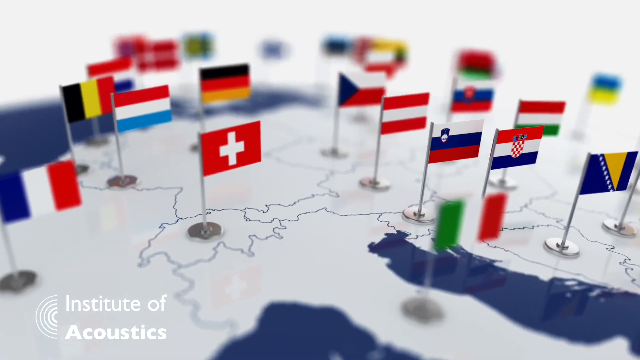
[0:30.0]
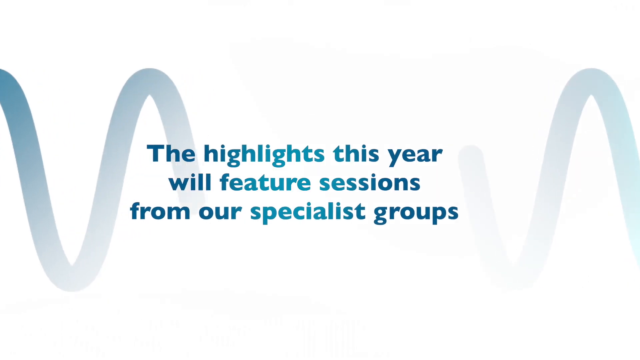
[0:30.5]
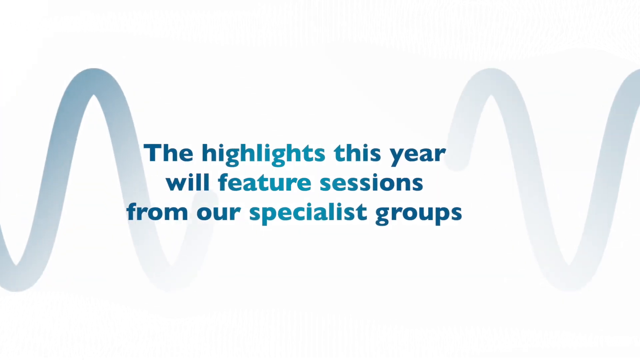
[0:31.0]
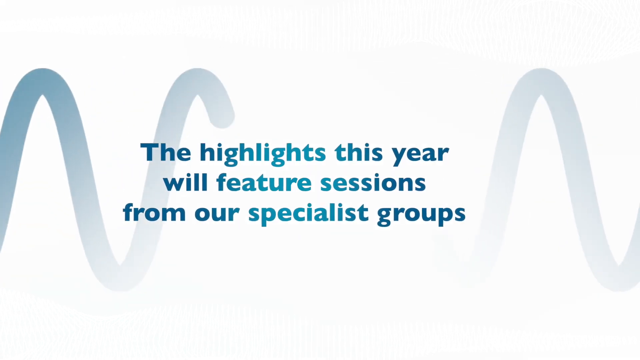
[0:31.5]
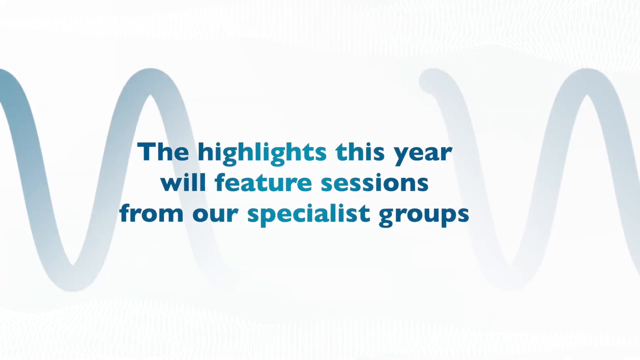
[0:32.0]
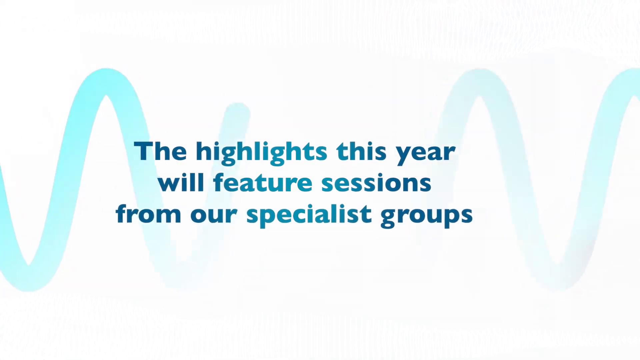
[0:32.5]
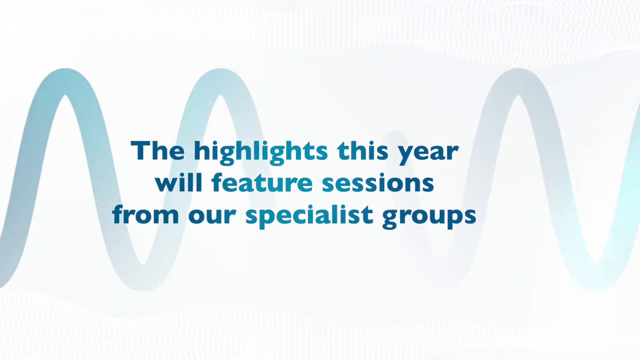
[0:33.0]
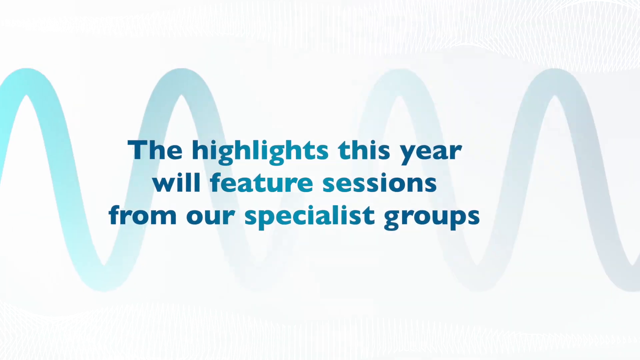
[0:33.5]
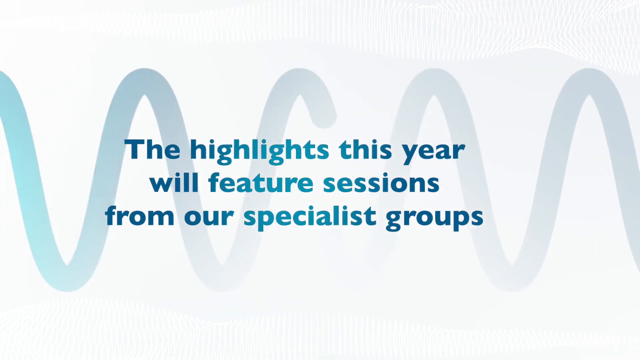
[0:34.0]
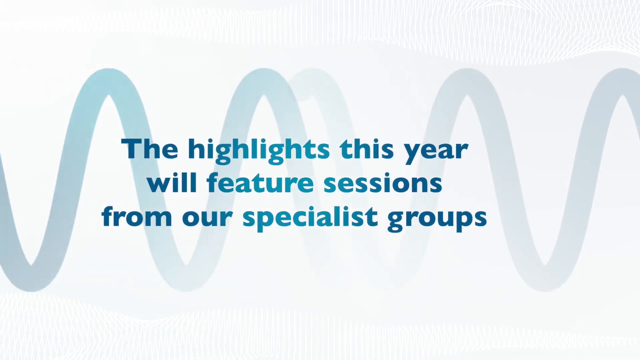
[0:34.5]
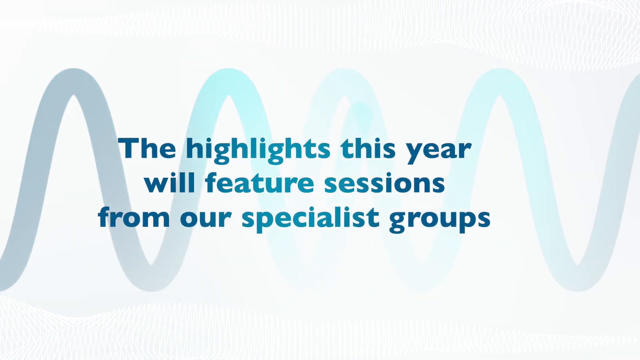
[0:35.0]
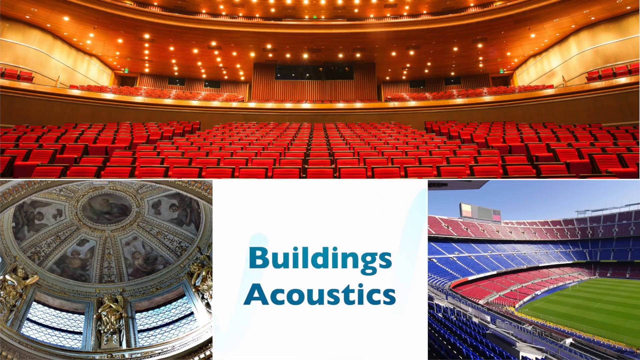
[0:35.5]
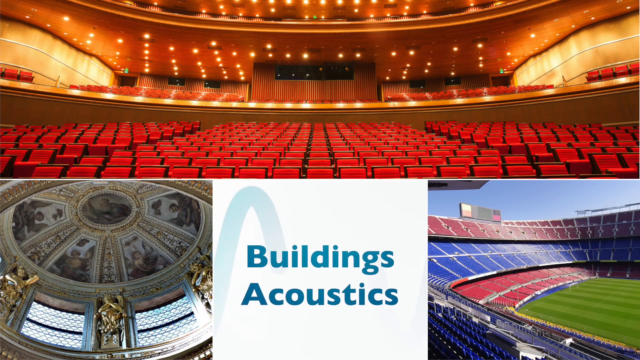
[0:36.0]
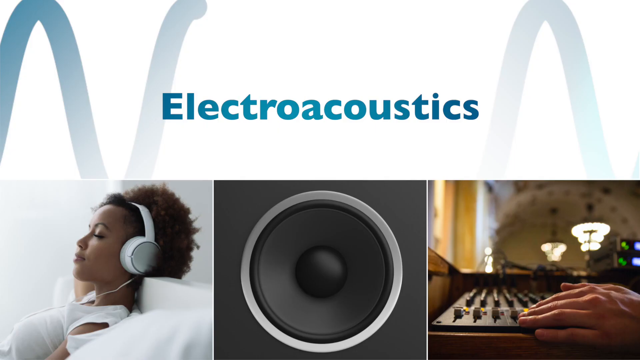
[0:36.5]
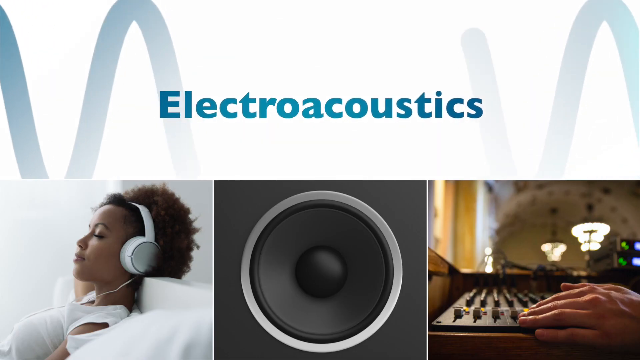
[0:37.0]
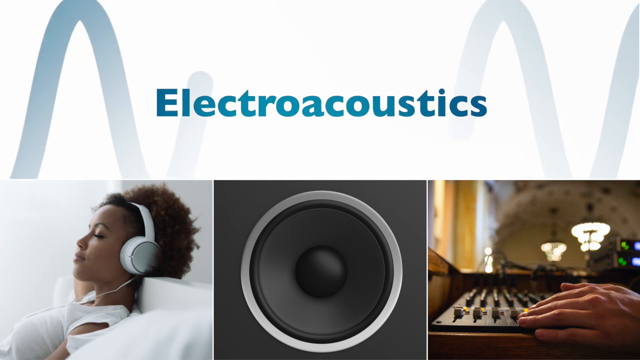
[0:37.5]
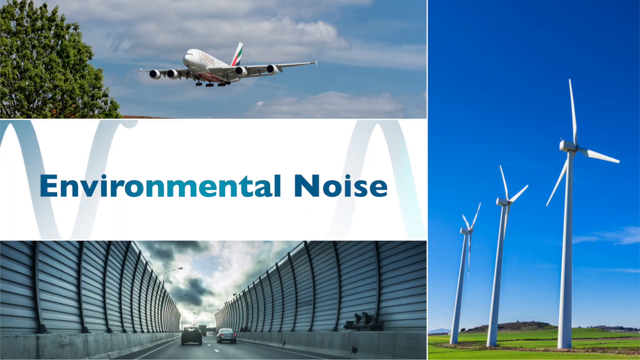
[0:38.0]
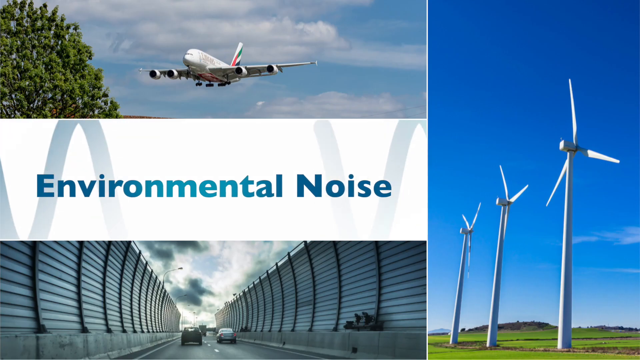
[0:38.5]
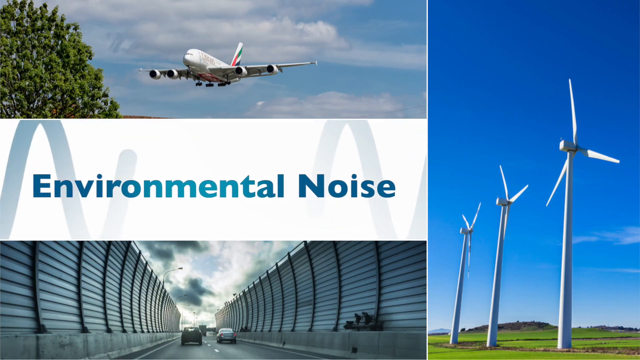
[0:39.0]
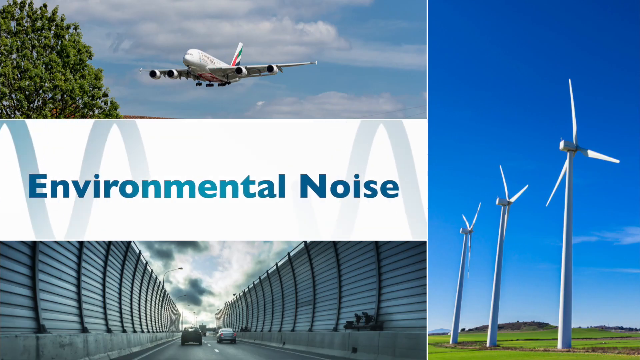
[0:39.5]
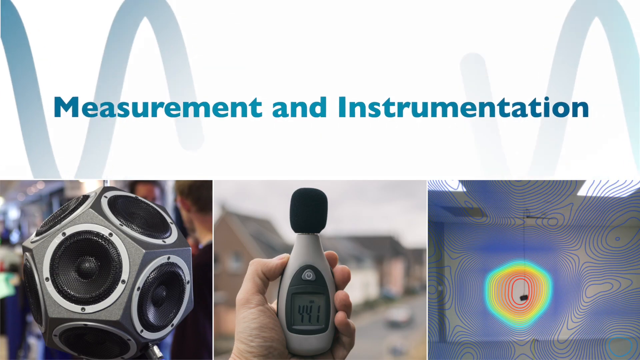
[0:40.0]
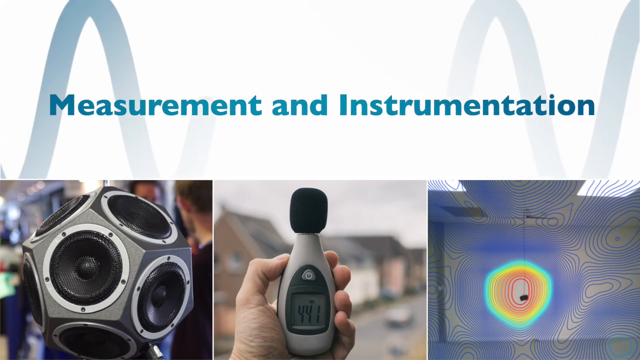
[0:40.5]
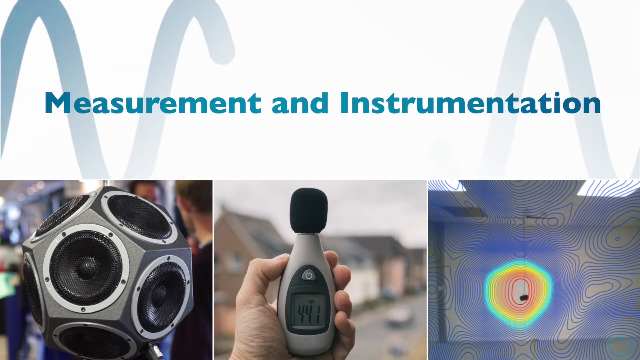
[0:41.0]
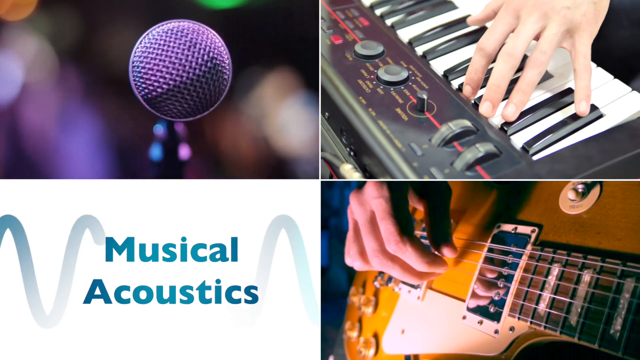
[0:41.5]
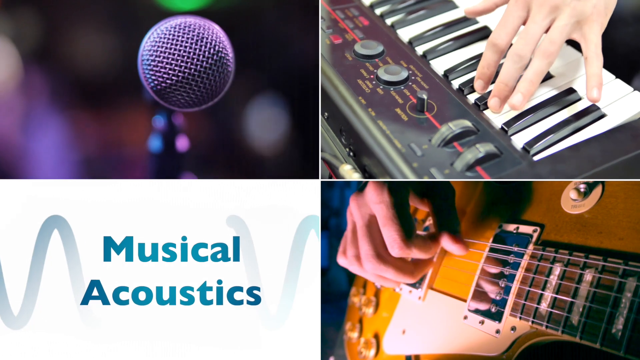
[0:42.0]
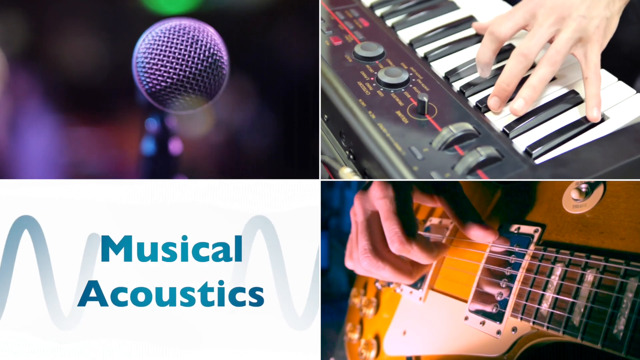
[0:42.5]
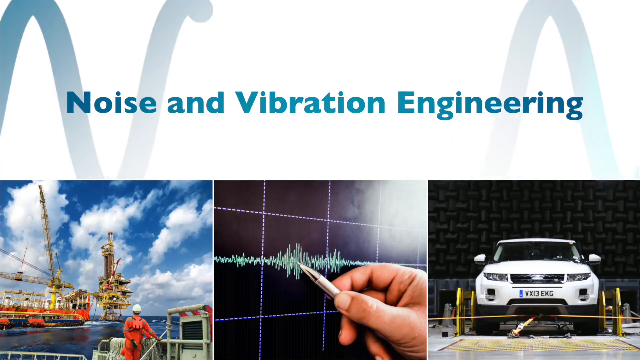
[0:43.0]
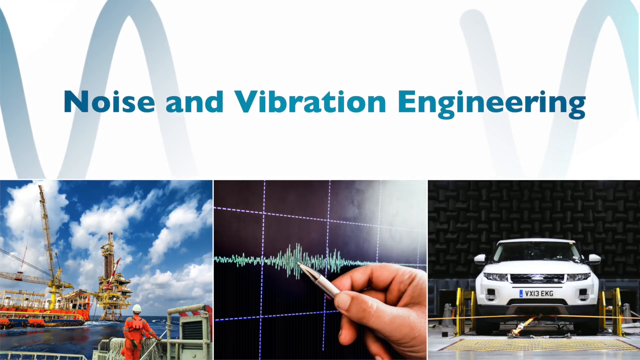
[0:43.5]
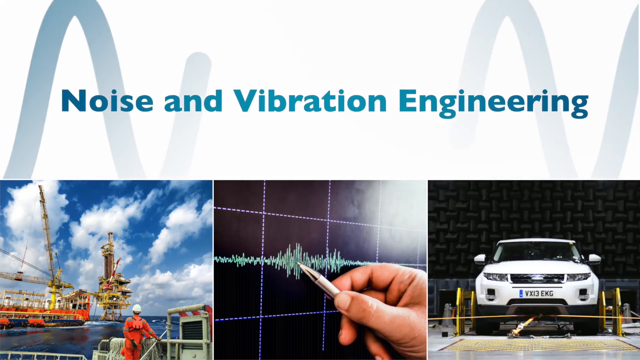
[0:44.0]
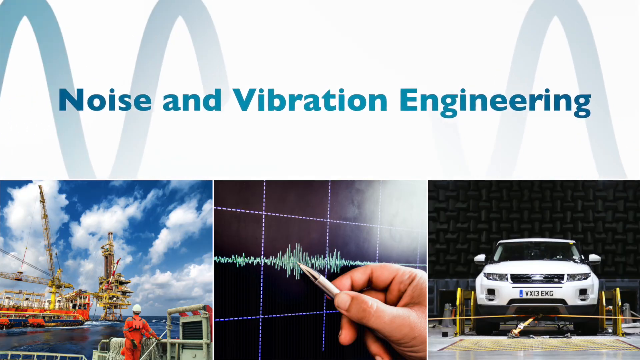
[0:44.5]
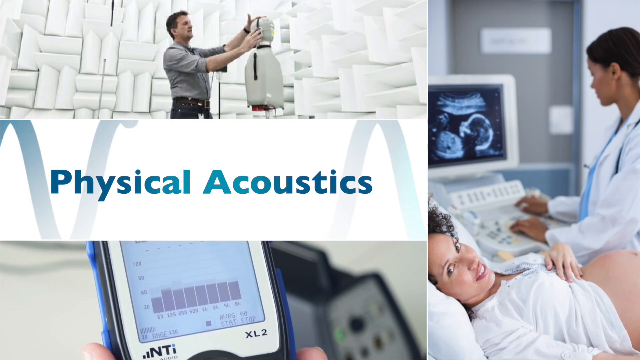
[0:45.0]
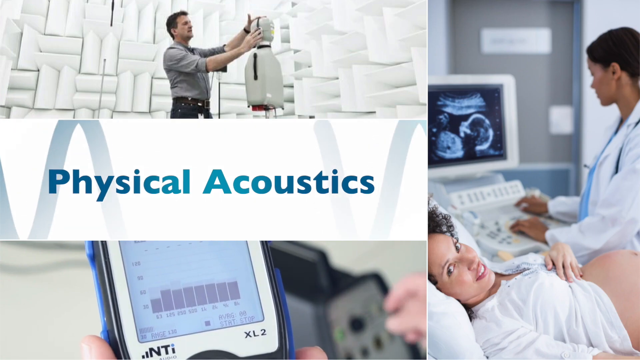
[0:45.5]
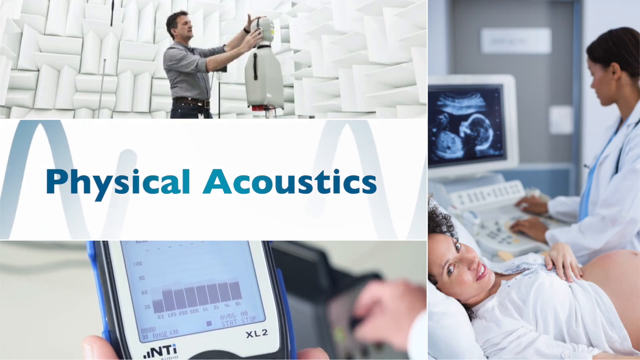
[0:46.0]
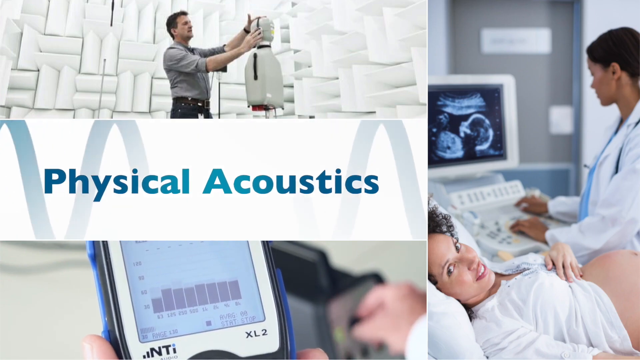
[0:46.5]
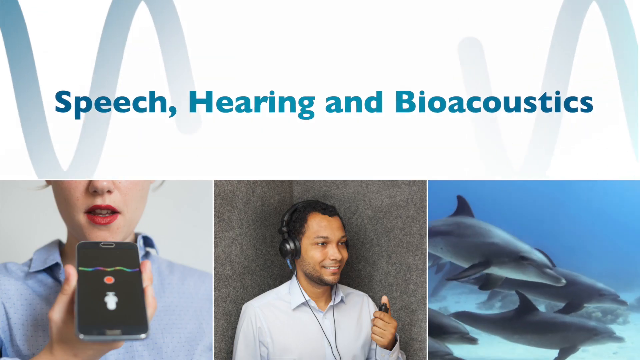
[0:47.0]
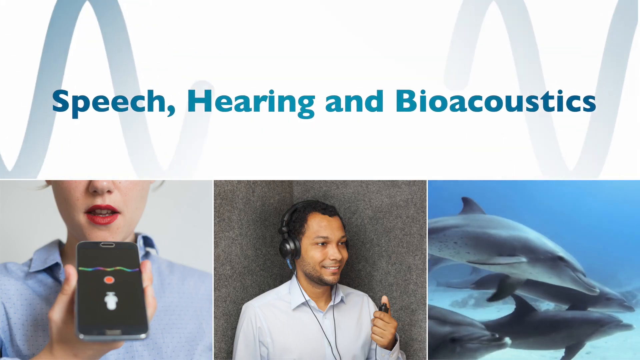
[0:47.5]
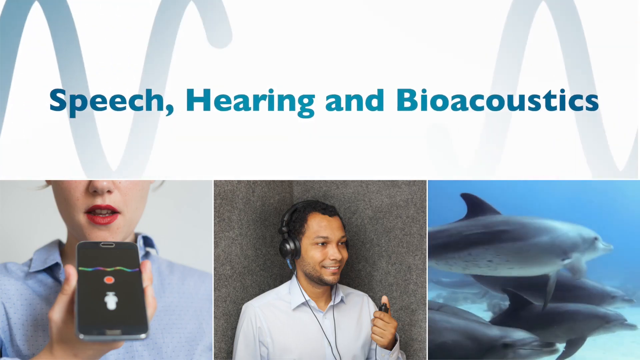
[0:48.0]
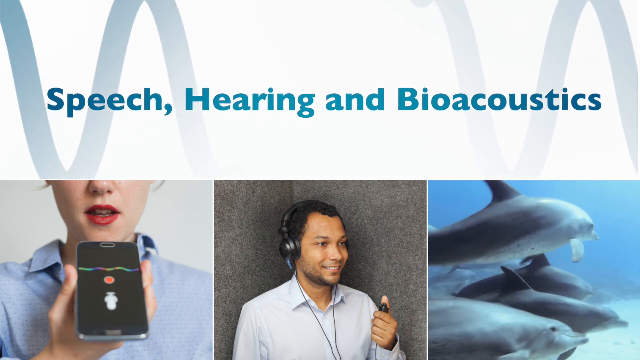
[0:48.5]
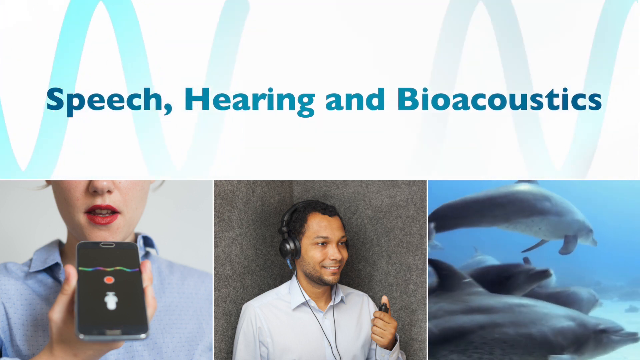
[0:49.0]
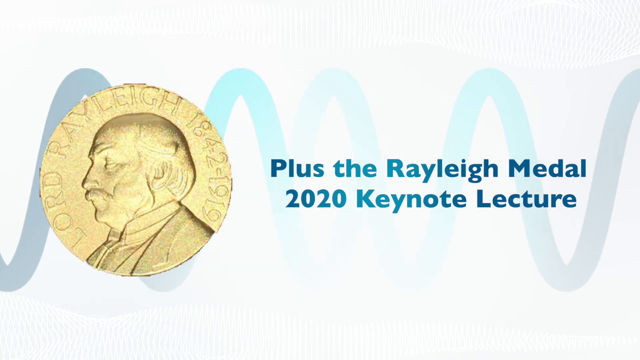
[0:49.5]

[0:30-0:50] A small globe with different country flags on it is shown, and text reads "the highlights this year will feature sessions from our specialist groups." A series of topics follows. "Building acoustics" appears with big arenas and big stadiums. "Electroacoustics" appears with someone wearing headphones, a speaker, and someone on some type of volume control. "Environmental noise" appears with an airplane, small wind turbines, solar panels and other things. "Measurement and instrumentation" appears with devices measuring things. "Musical acoustics" appears with someone on a guitar, a microphone and a keyboard. "Noise and vibration engineering" appears with some type of car, someone measuring sound waves, and construction workers working on something. "Physical acoustics" appears with someone looking at an ultrasound for a woman with a baby and someone working on some type of robot. "Speech hearing and bioacoustics" appears with dolphins, someone on headphones, and someone talking on the phone.